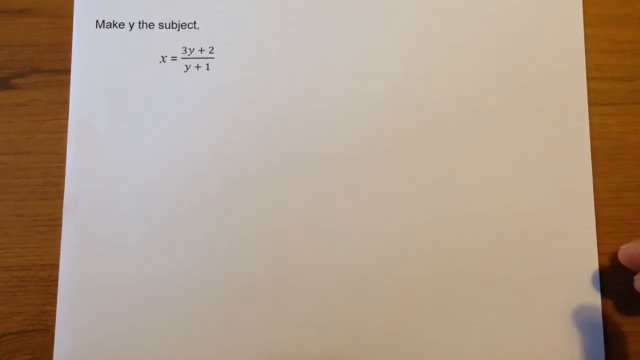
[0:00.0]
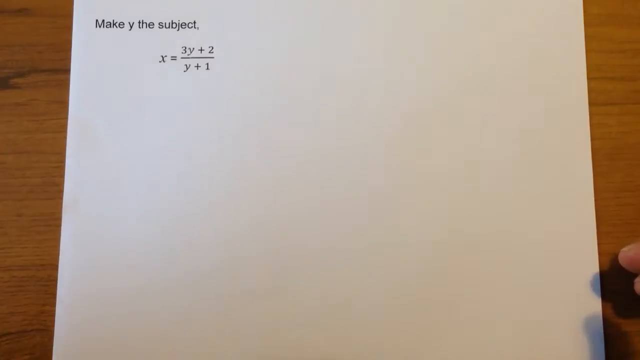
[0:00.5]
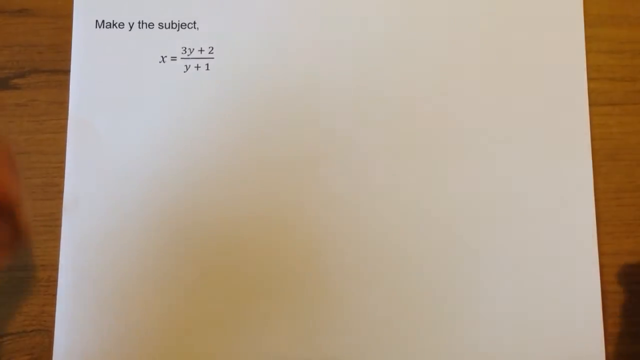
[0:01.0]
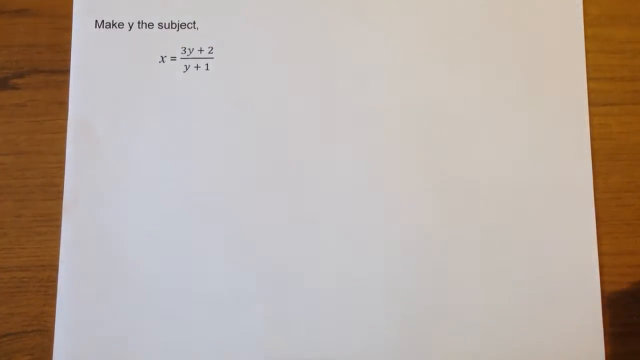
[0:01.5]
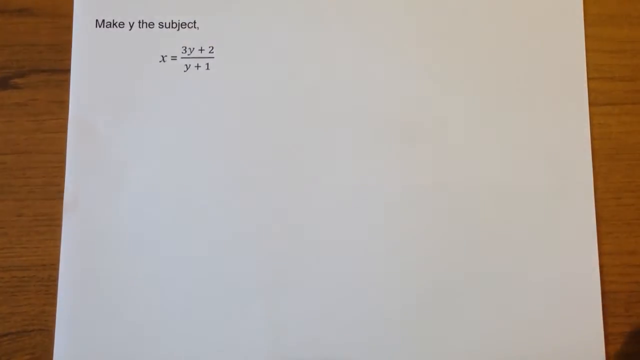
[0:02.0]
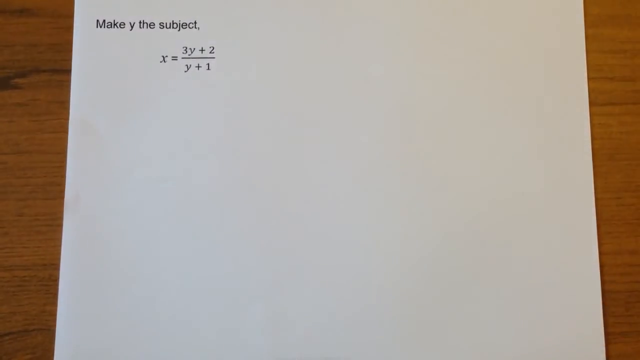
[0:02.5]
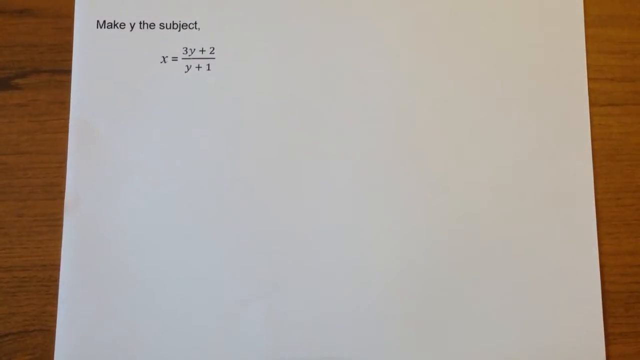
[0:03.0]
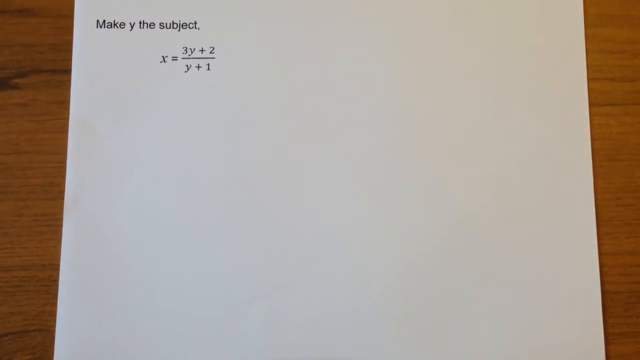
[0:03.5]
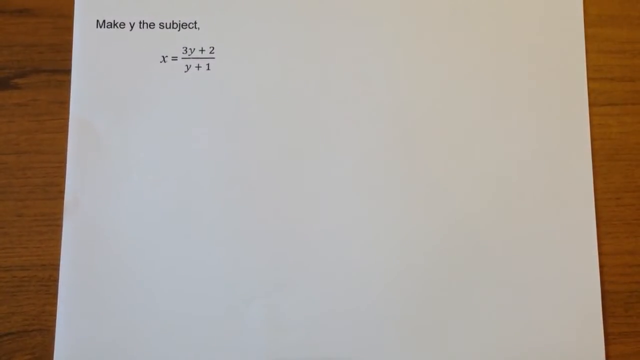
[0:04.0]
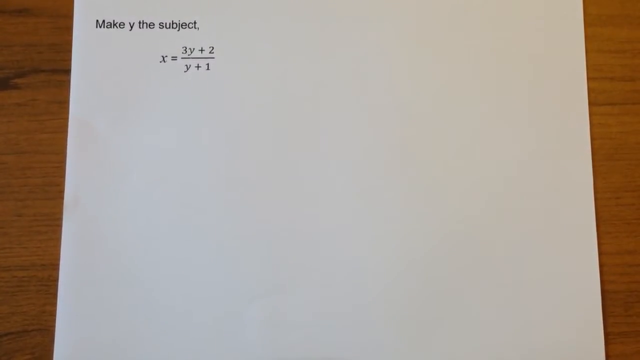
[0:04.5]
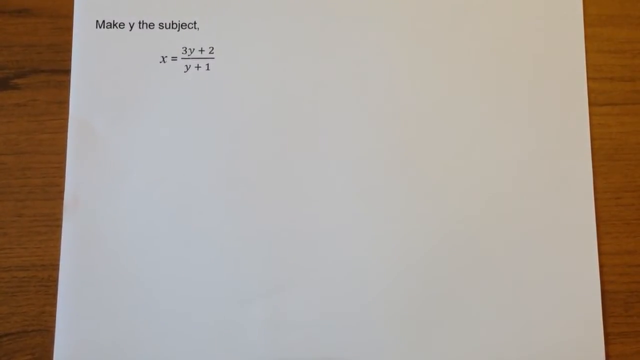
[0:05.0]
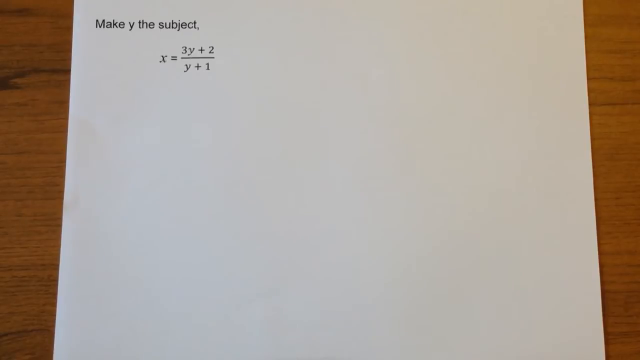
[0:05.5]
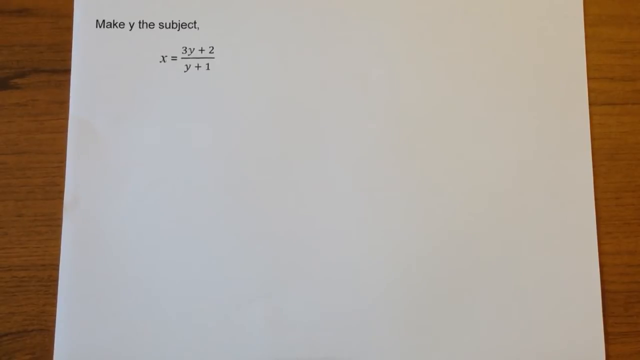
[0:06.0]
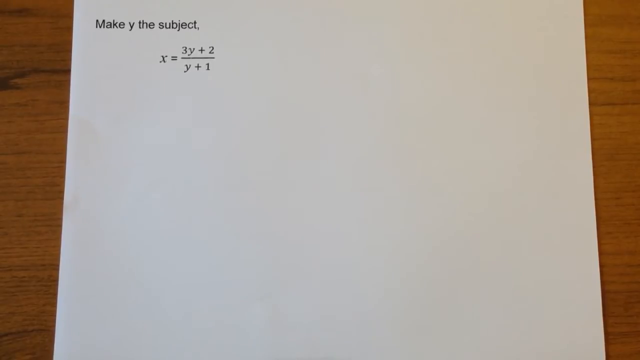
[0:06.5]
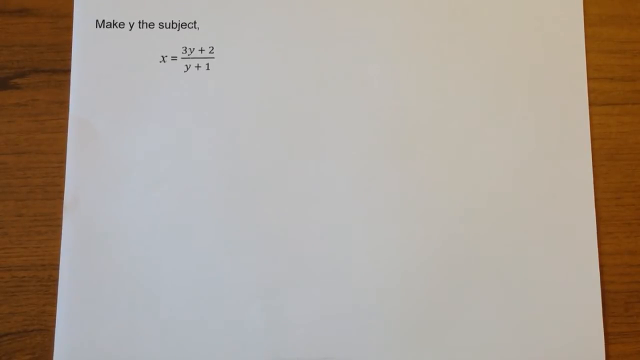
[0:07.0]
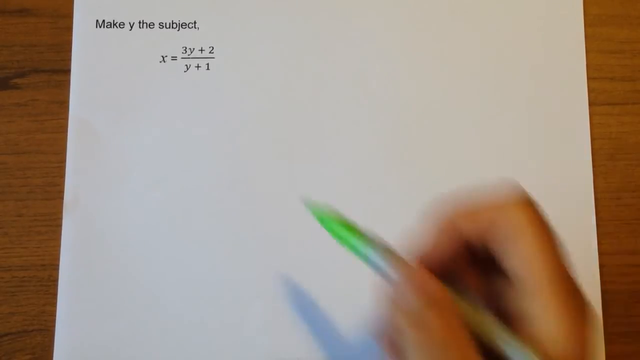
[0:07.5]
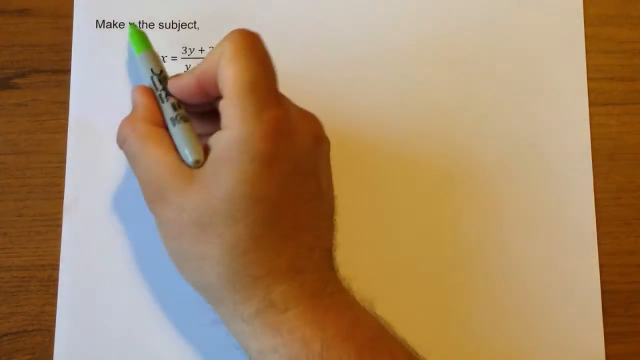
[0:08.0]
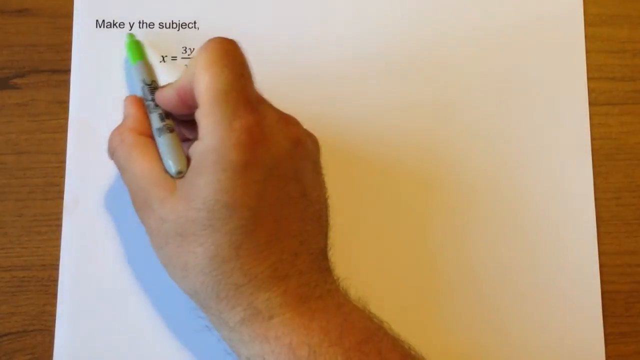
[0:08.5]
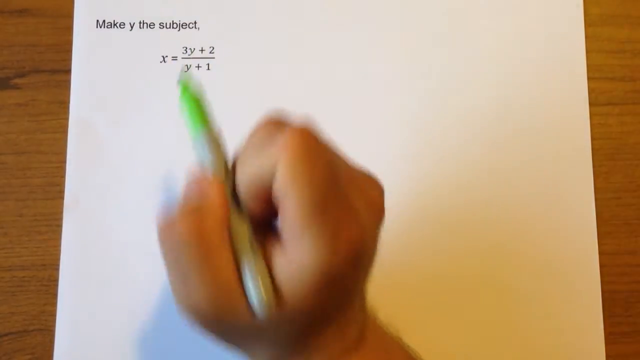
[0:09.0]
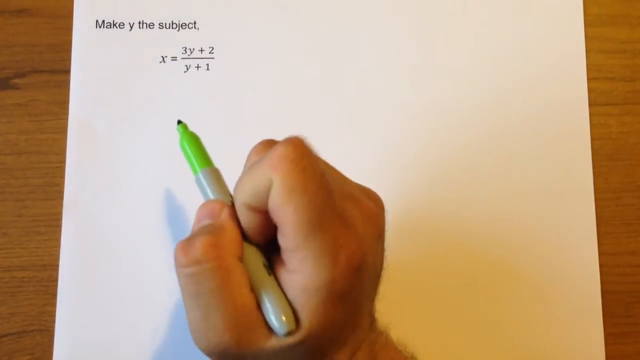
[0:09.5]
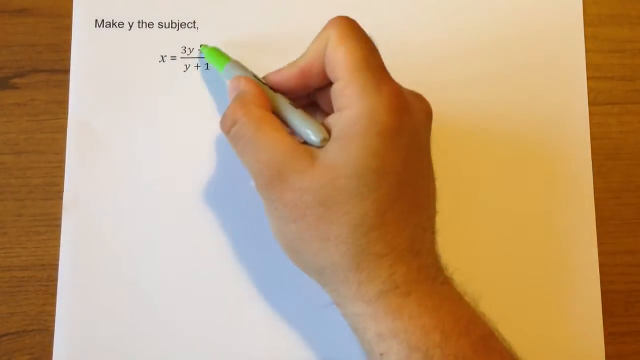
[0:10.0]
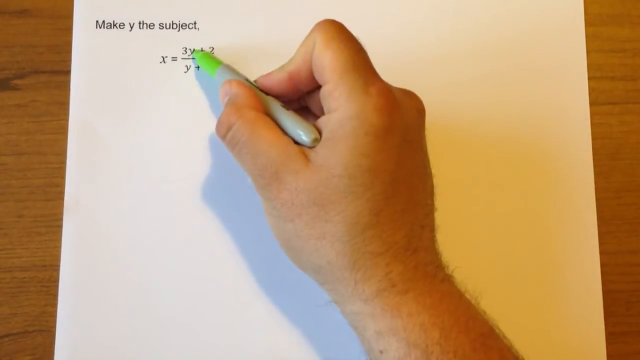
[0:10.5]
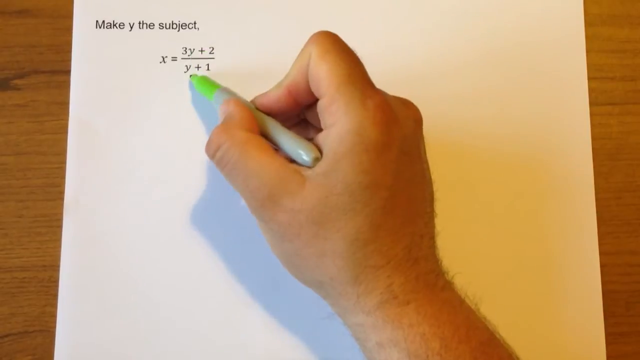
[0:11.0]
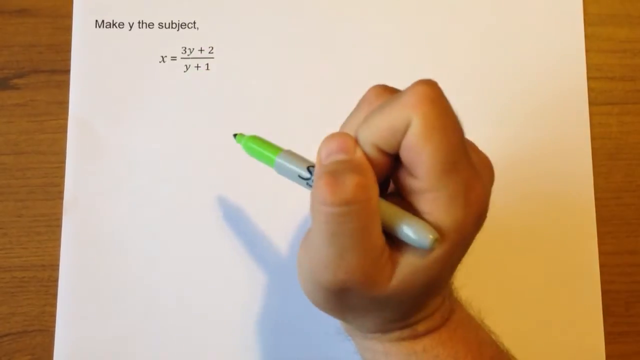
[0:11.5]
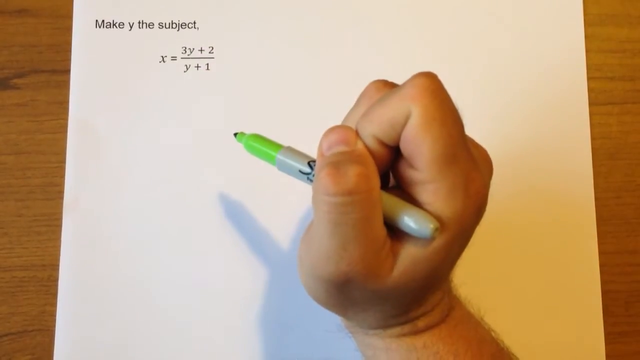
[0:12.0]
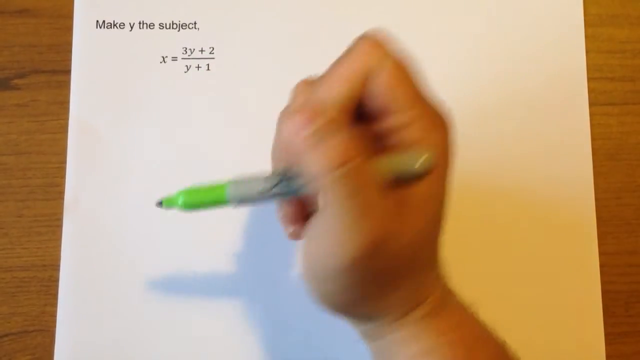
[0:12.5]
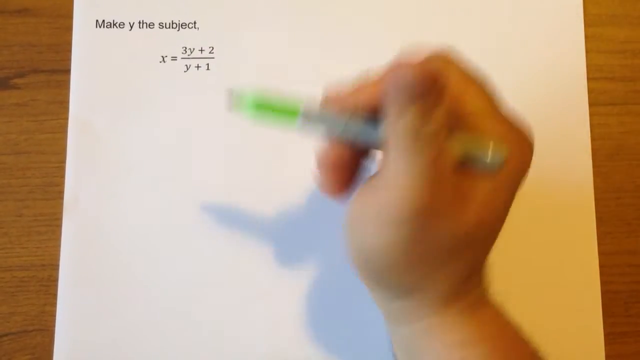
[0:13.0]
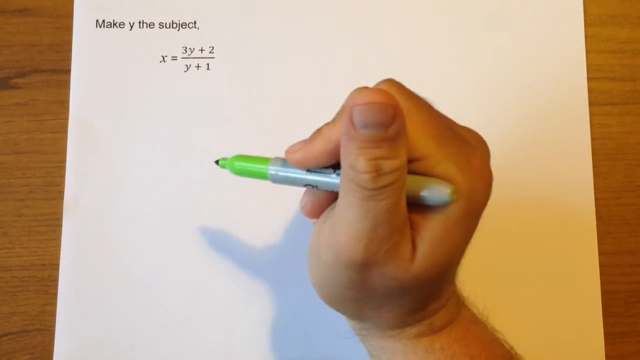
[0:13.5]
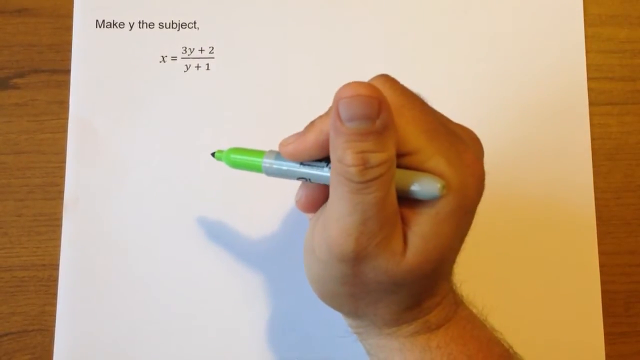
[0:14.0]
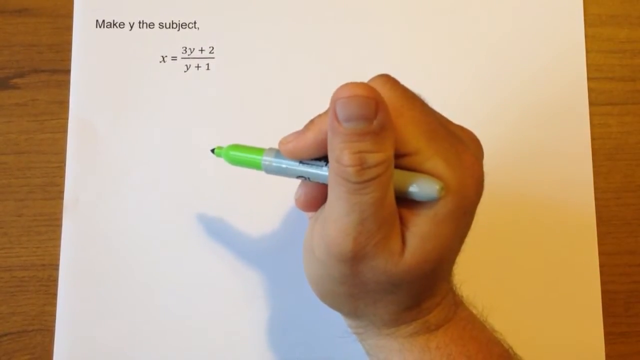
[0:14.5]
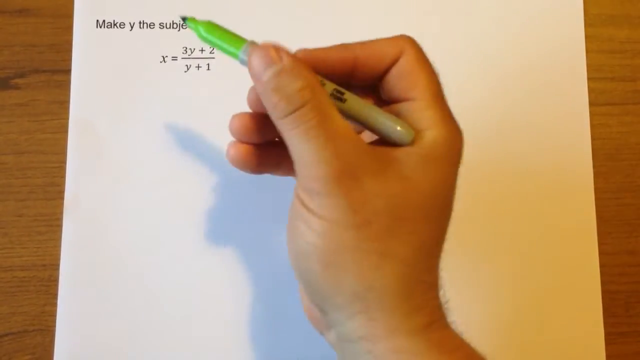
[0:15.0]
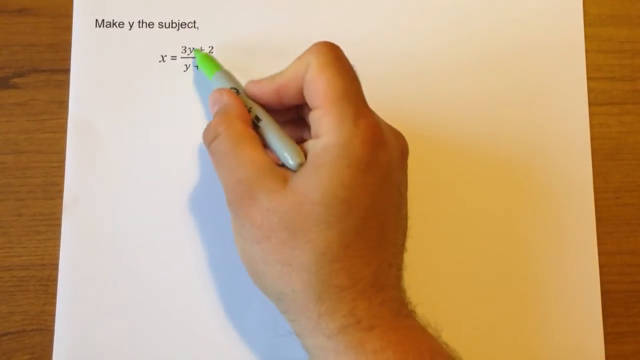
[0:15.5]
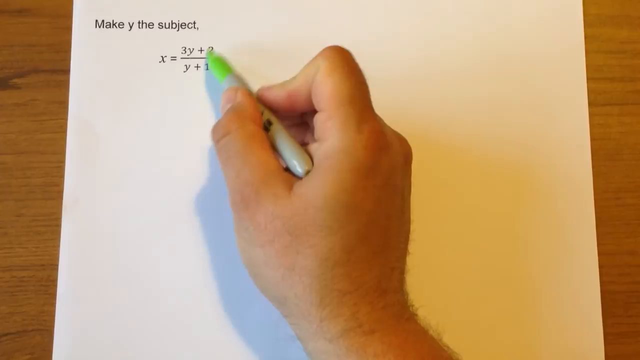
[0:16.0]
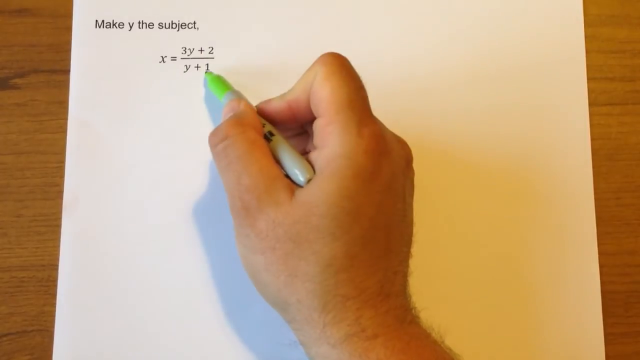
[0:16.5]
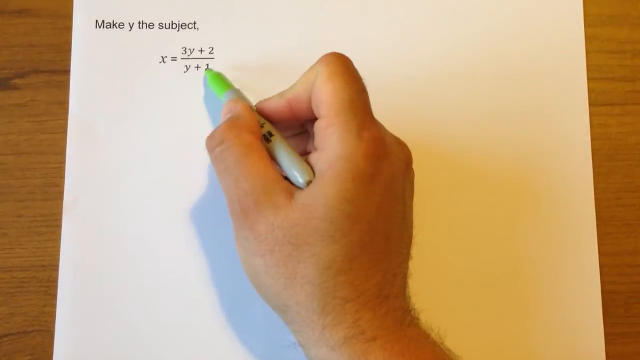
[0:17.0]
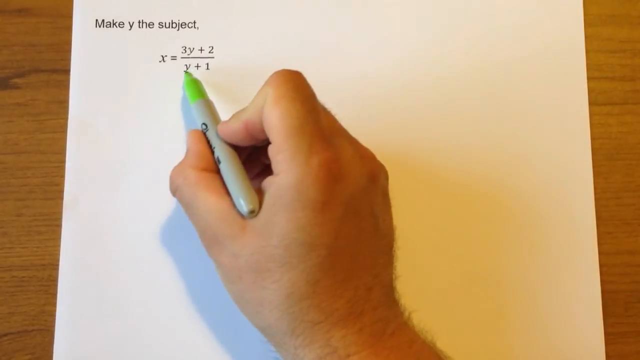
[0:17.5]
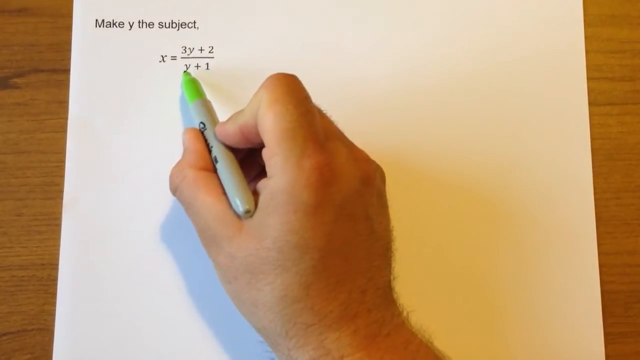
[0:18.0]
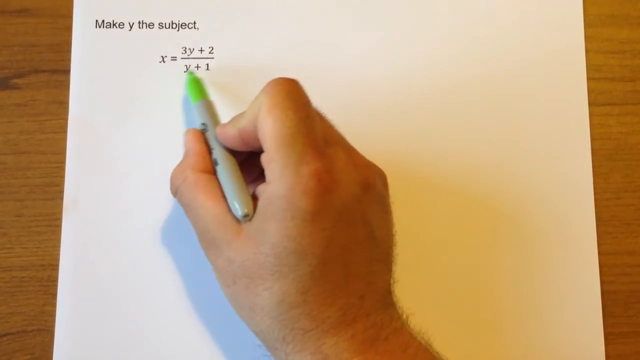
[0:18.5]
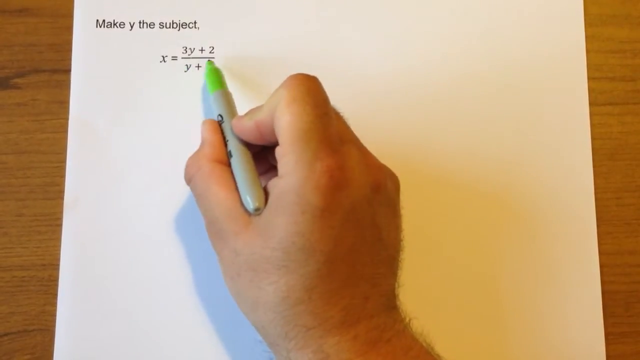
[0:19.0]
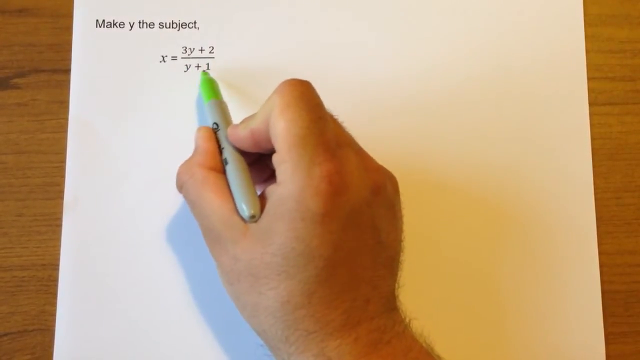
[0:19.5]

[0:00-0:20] A plain white sheet of paper lies on a brown table. At the top left, written in black ink, is "make y the subject," and underneath it is the equation x = (3y + 2)/(y + 1). In the bottom right-hand corner, a person's right hand, Caucasian, holds a green highlighter. He touches underneath "make y the subject," then touches the y of the 3y and then the y at the bottom of the fraction.